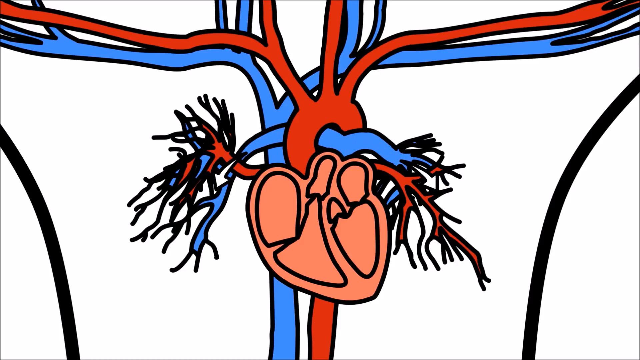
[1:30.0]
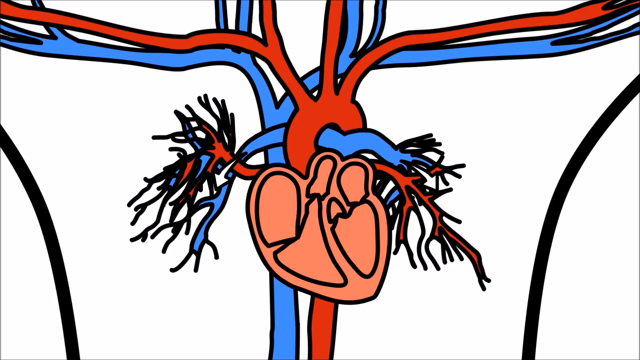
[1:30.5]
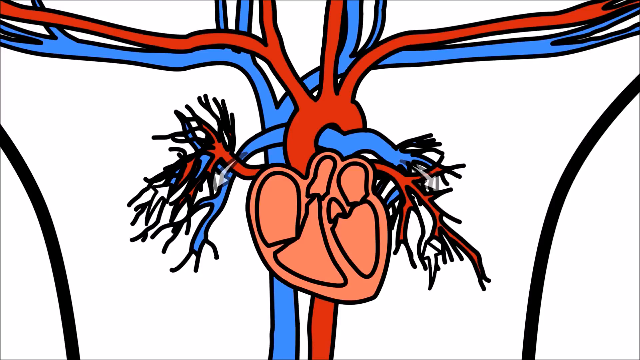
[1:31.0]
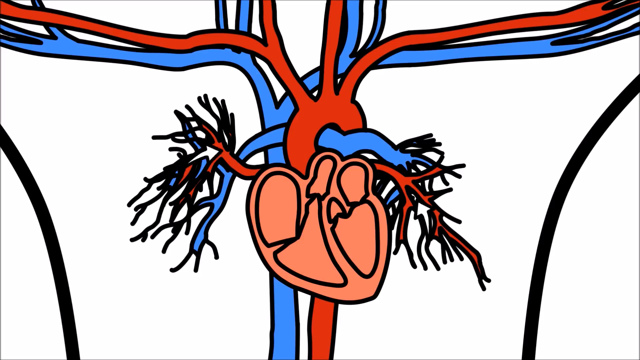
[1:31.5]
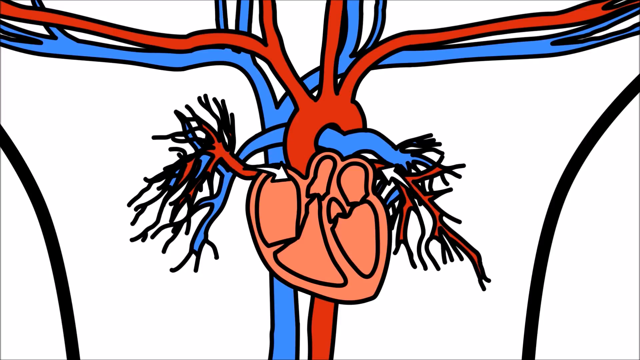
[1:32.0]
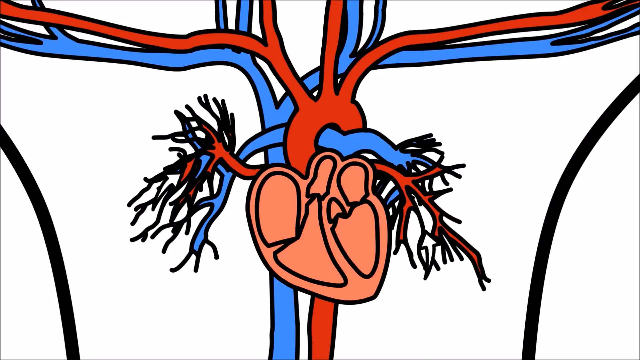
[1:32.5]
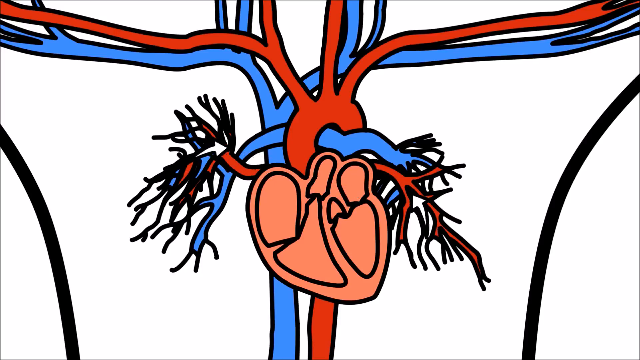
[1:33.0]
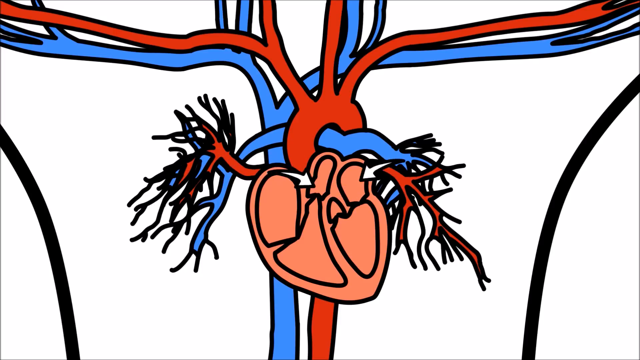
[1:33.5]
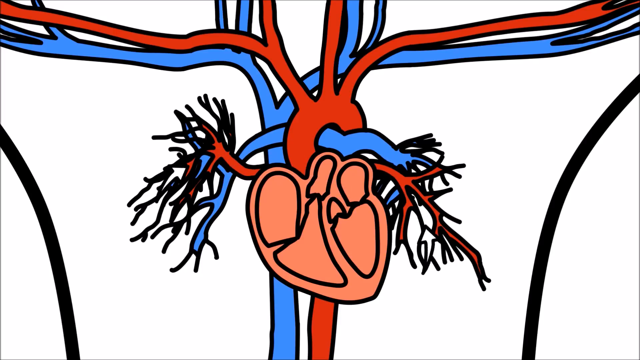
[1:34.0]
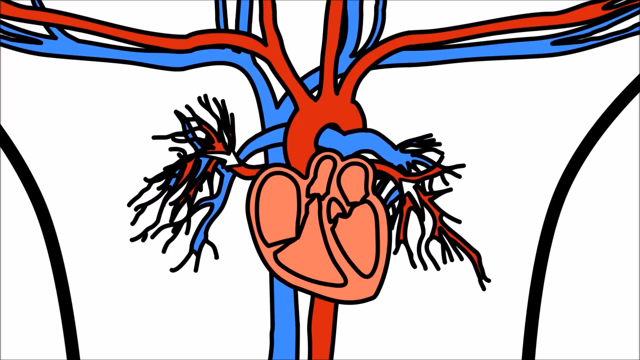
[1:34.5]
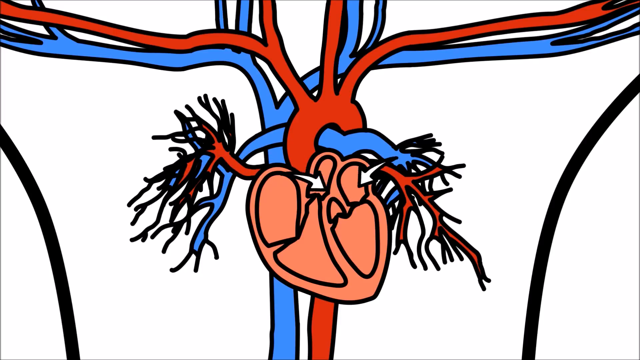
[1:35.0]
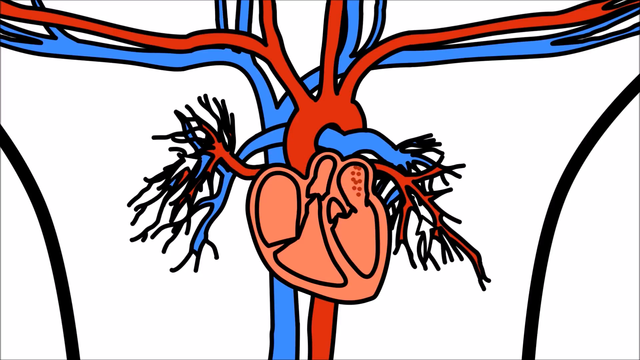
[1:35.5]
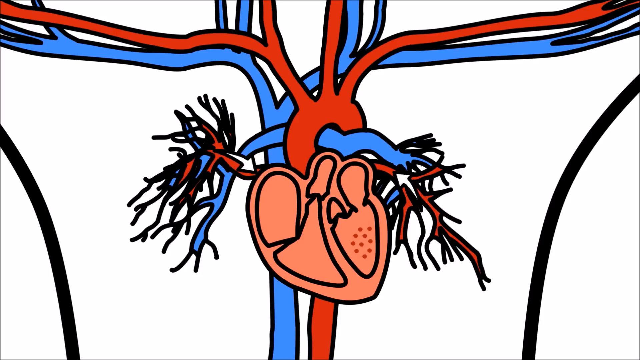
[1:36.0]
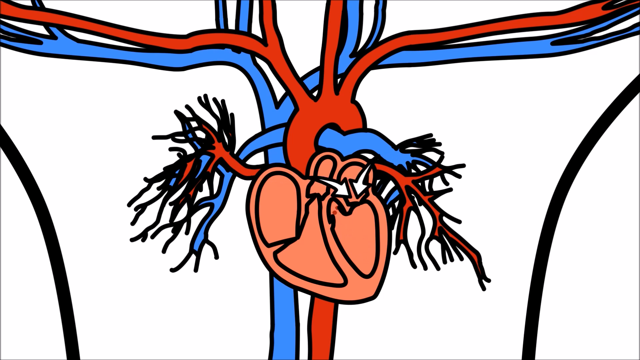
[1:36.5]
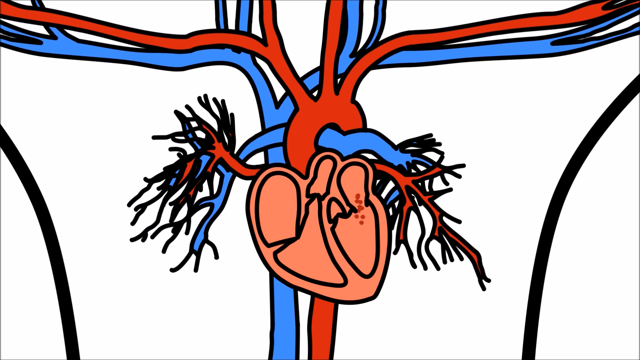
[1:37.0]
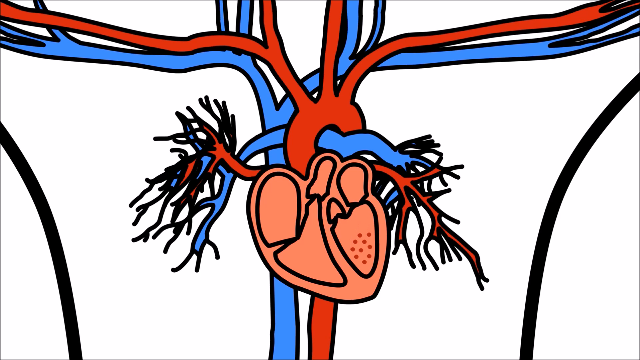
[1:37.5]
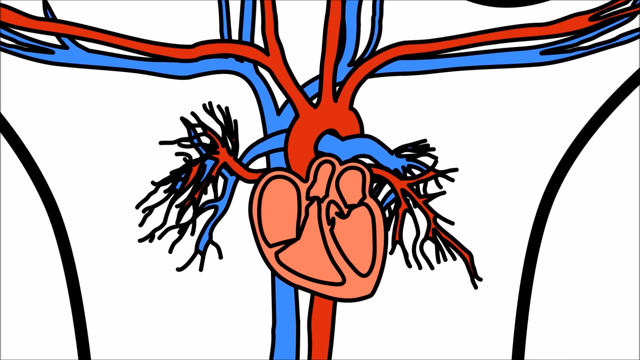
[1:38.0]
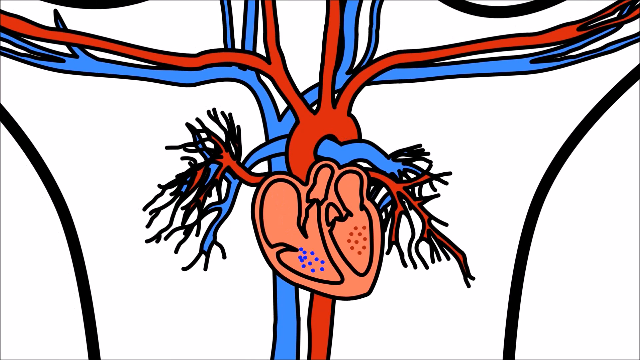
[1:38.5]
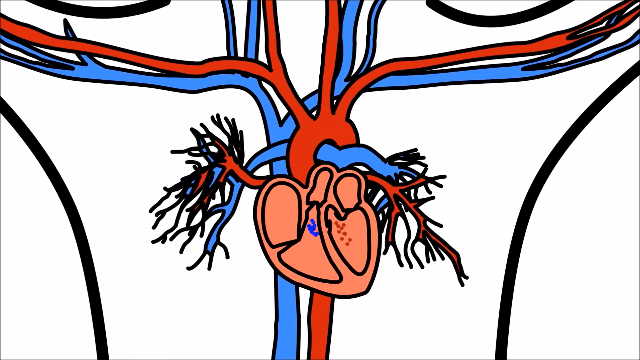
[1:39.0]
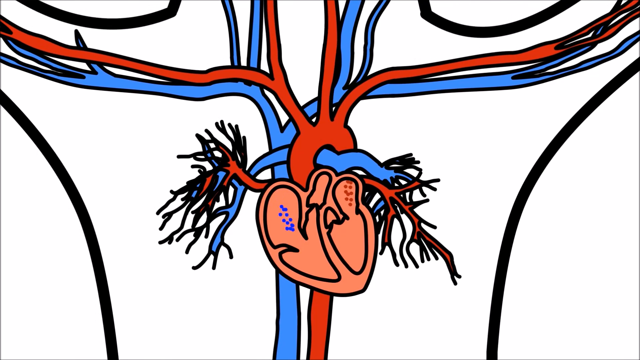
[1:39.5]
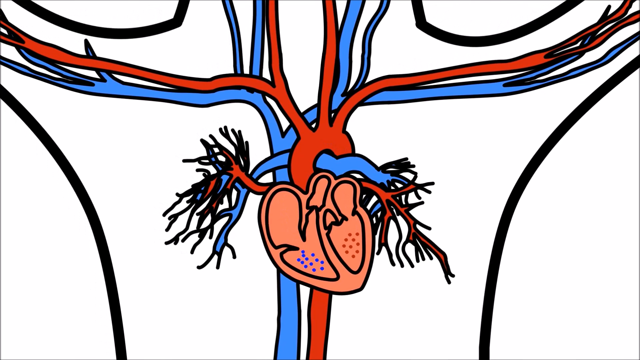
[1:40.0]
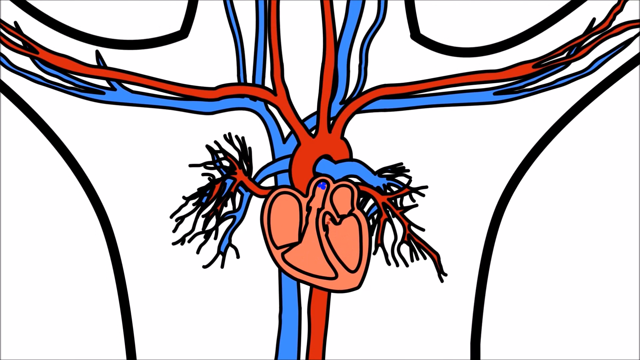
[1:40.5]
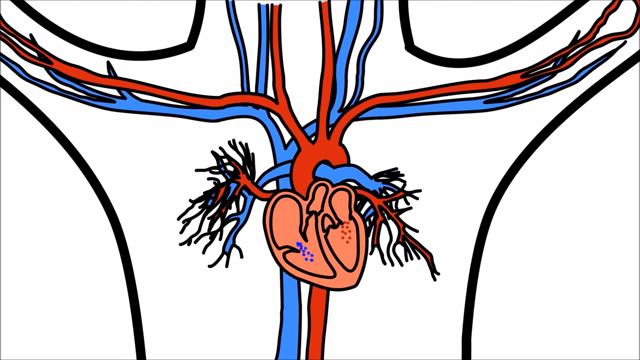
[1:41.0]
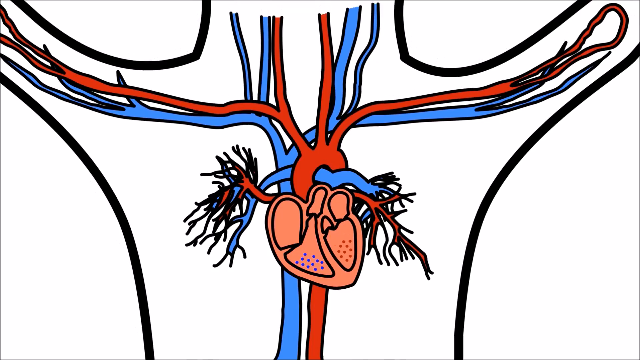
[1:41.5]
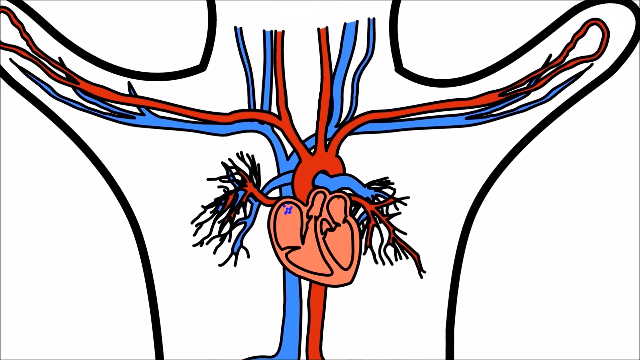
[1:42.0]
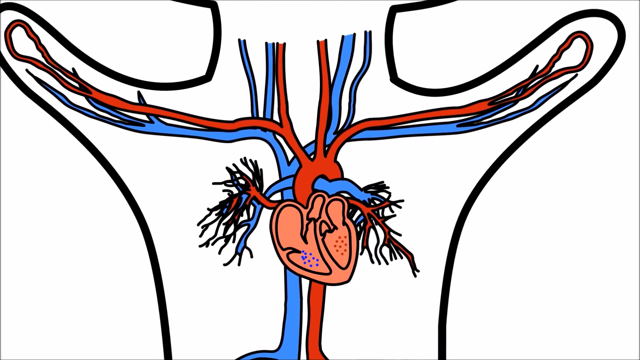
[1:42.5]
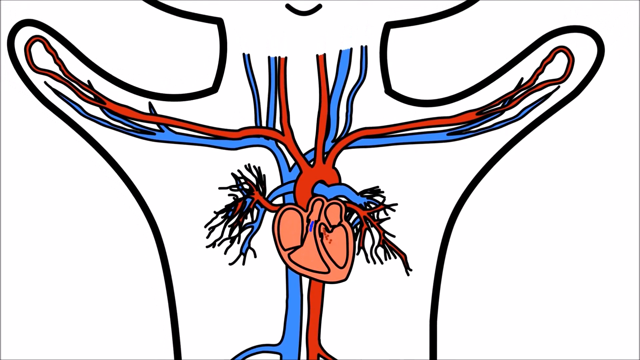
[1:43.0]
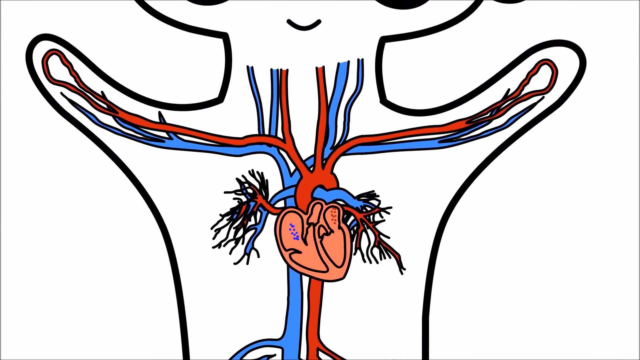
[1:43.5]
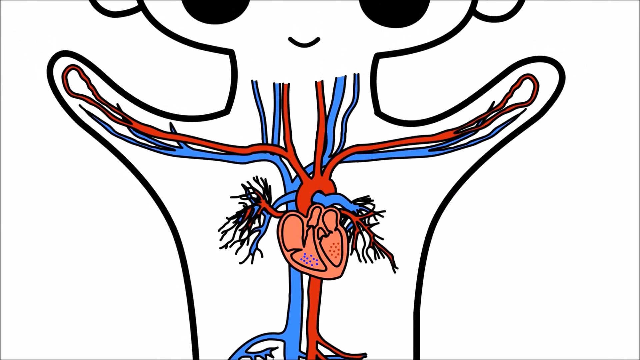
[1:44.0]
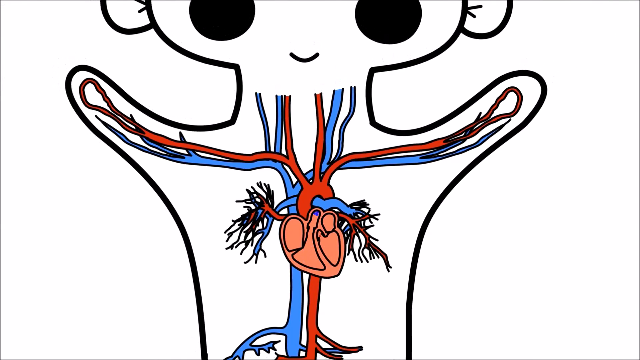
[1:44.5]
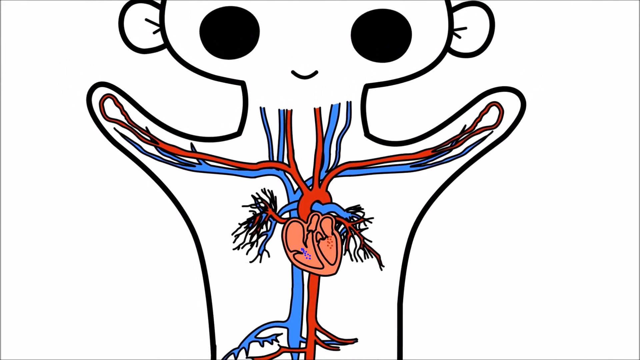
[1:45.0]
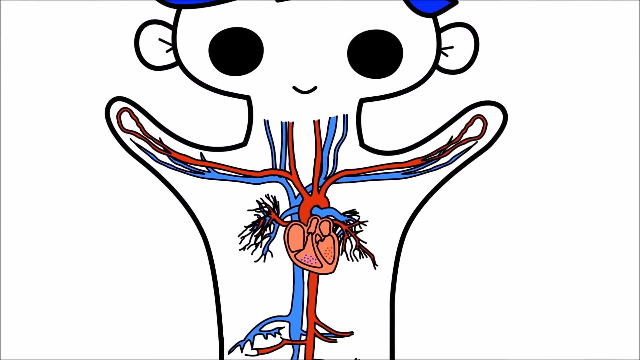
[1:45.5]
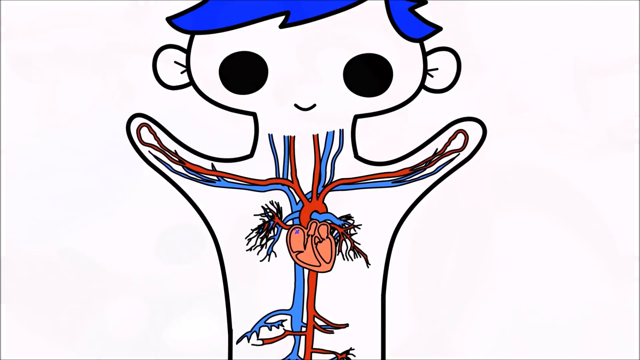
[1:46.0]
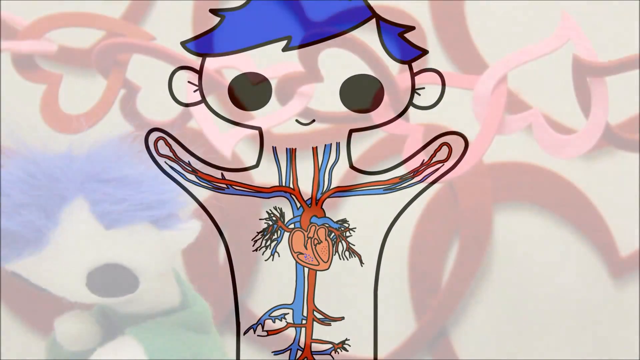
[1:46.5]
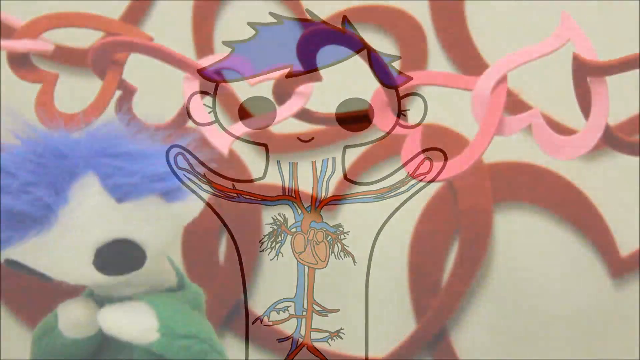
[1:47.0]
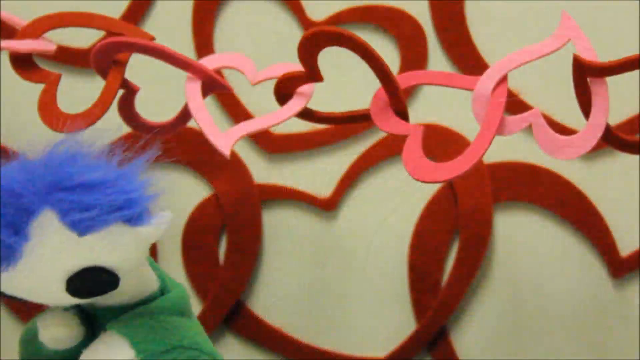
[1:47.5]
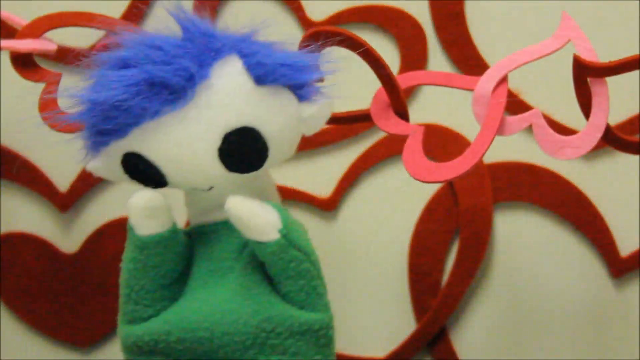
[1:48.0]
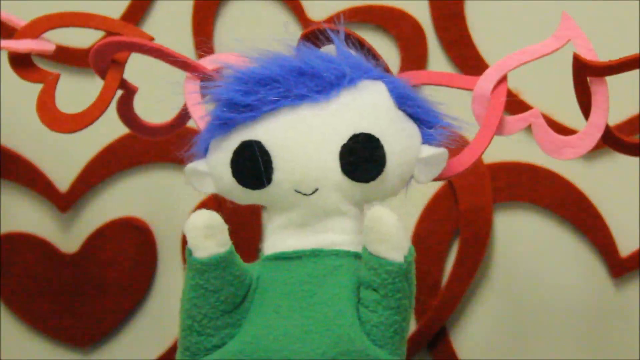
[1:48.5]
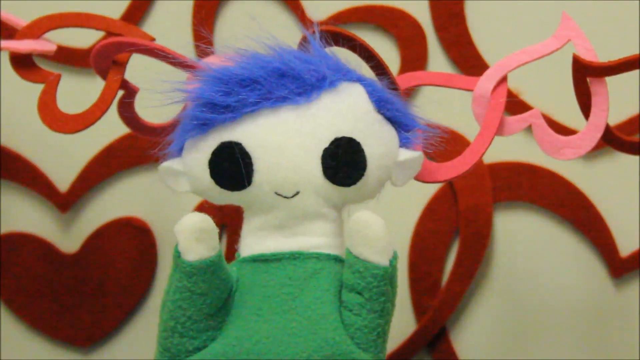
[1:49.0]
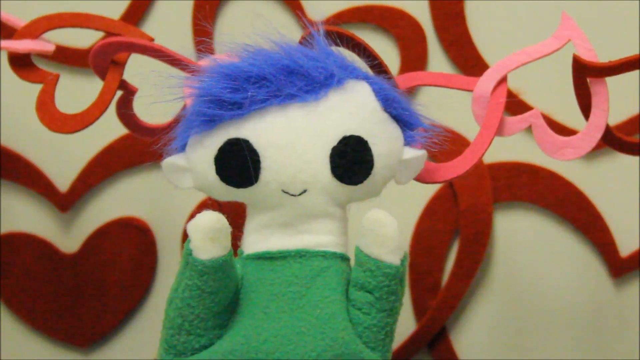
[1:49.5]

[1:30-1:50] An image shows the heart and what appear to be the different veins connected to it, some red and some blue. Arrows kind of show branches pumping blood into the heart, and as the blood is pumped into the heart it goes out and is distributed to the rest of the body. Red and blue kind of come in, enter the heart and are then dispersed out. The video then cuts to the actual hand puppet with both arms up. He has blue hair, black eyes, a smile on his face and the green sweater, with both hands in the air and the heart chain behind him, as he kind of sits there doing nothing.